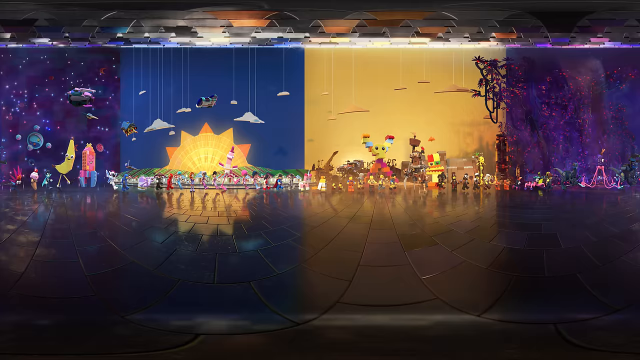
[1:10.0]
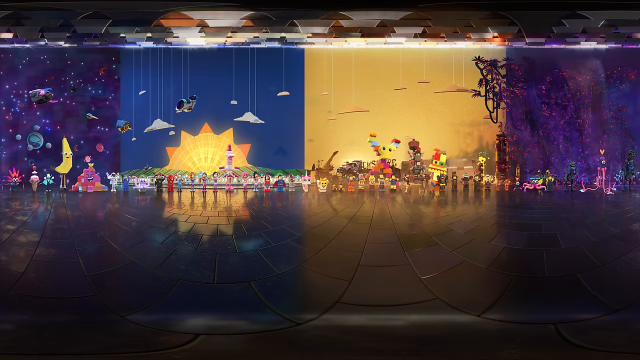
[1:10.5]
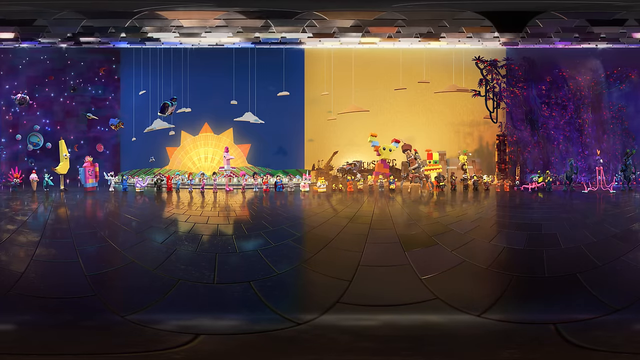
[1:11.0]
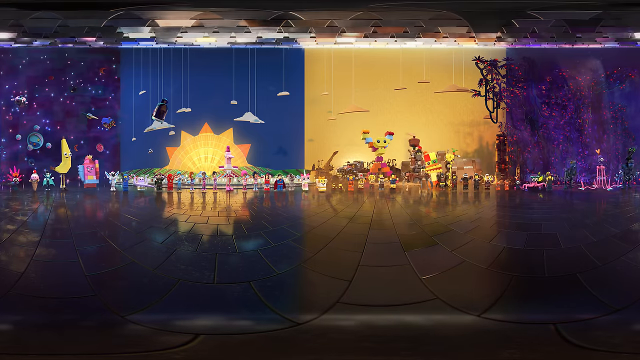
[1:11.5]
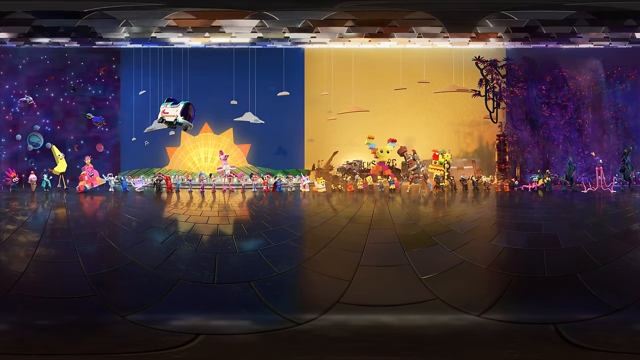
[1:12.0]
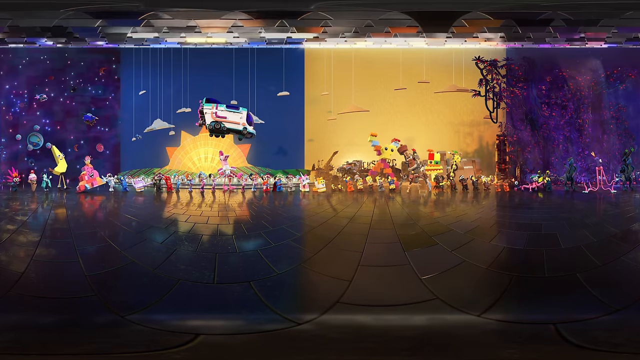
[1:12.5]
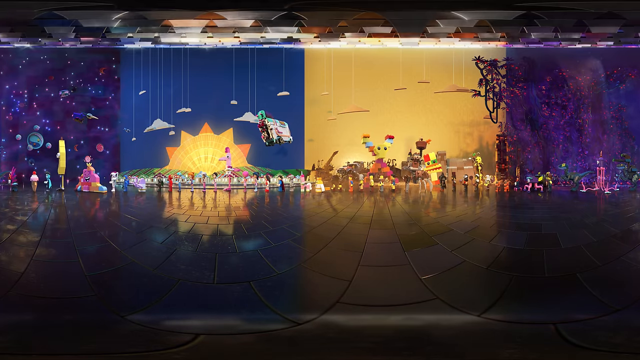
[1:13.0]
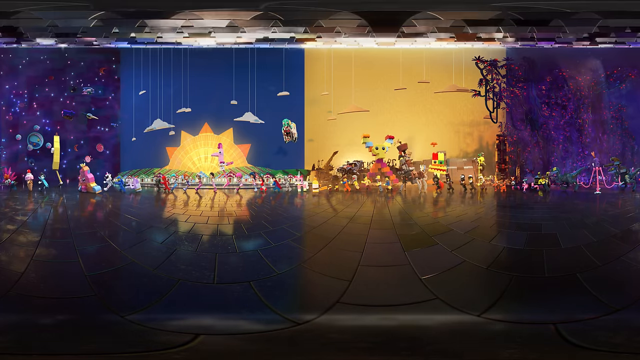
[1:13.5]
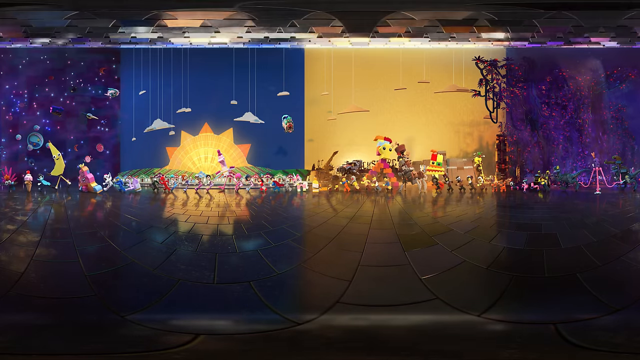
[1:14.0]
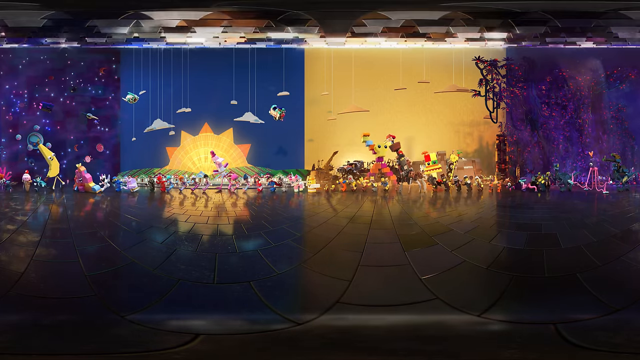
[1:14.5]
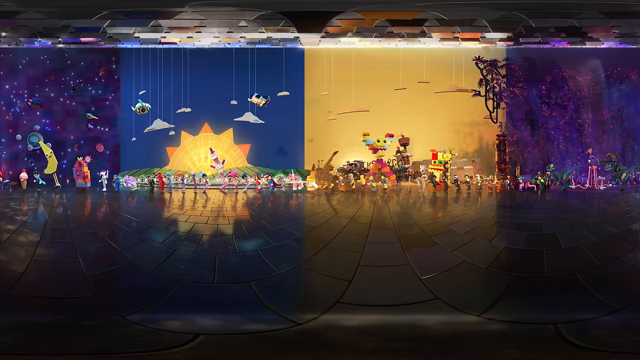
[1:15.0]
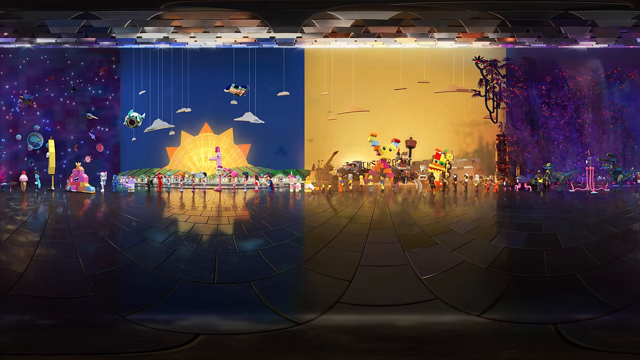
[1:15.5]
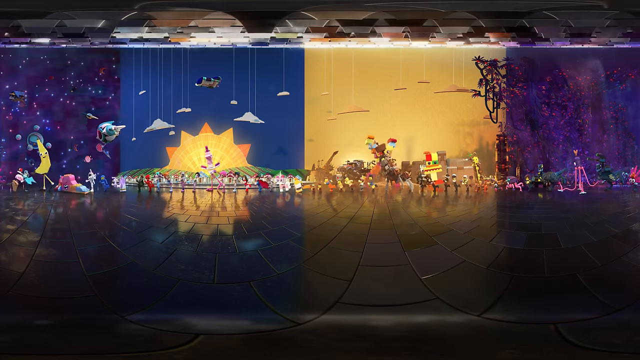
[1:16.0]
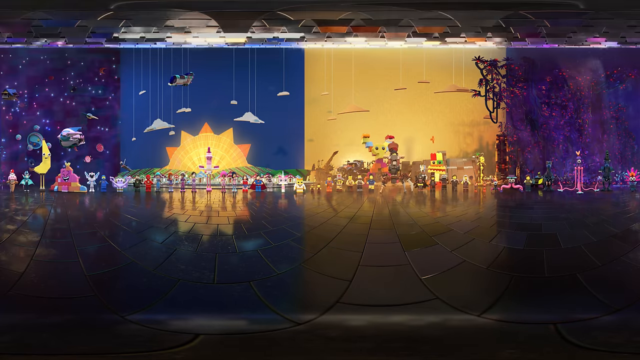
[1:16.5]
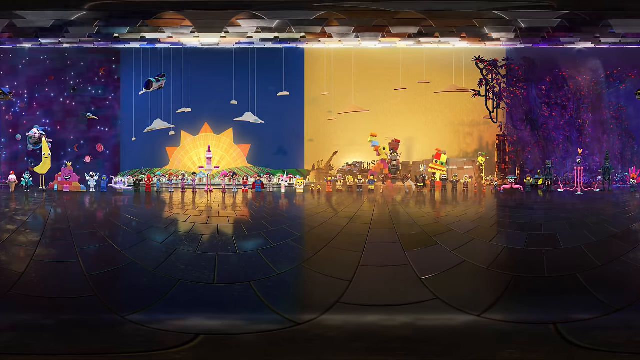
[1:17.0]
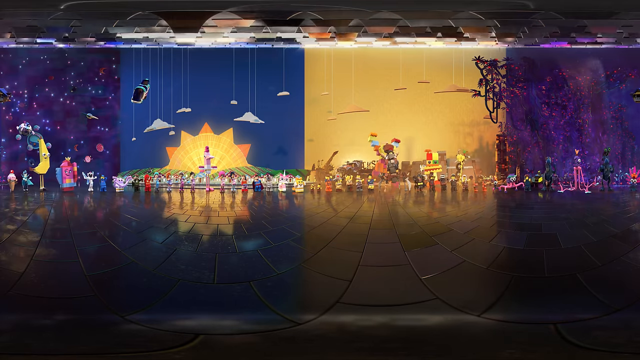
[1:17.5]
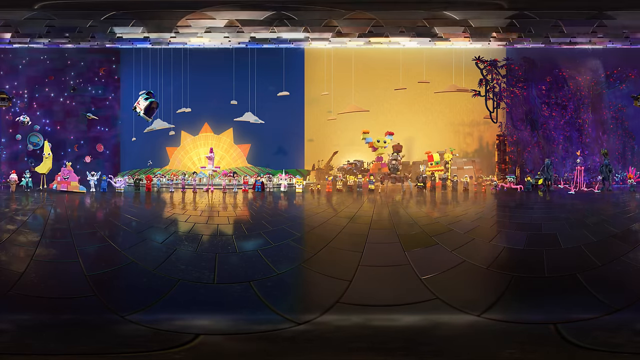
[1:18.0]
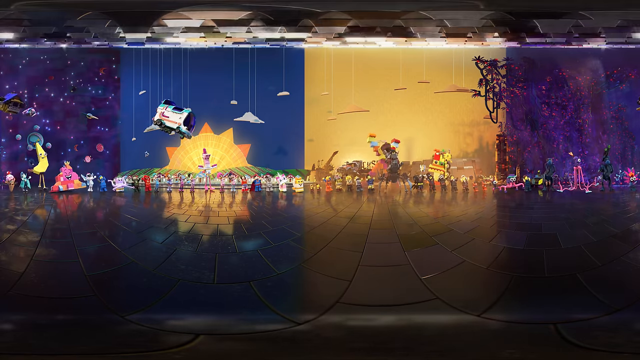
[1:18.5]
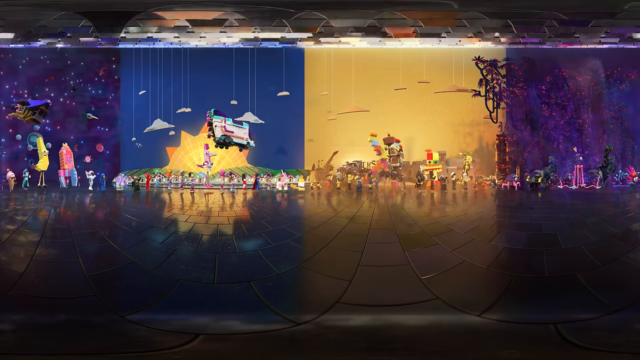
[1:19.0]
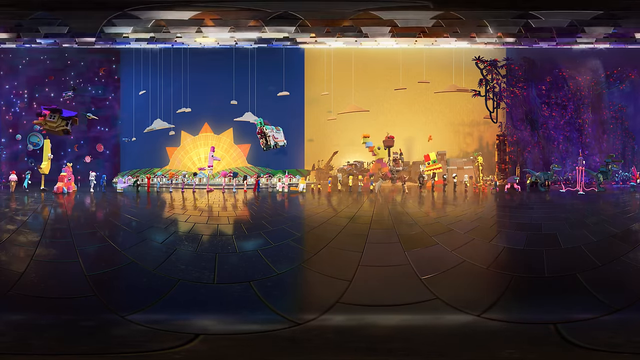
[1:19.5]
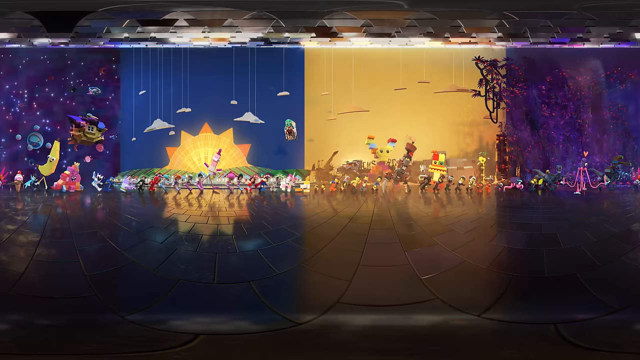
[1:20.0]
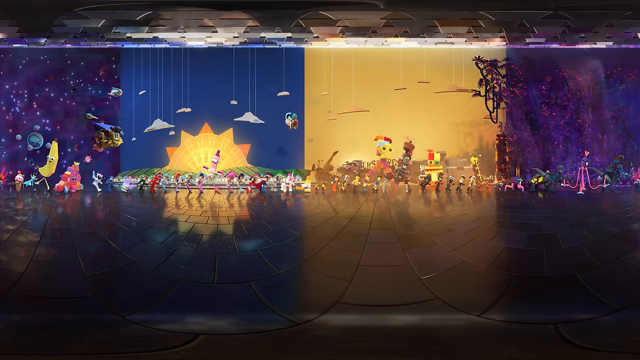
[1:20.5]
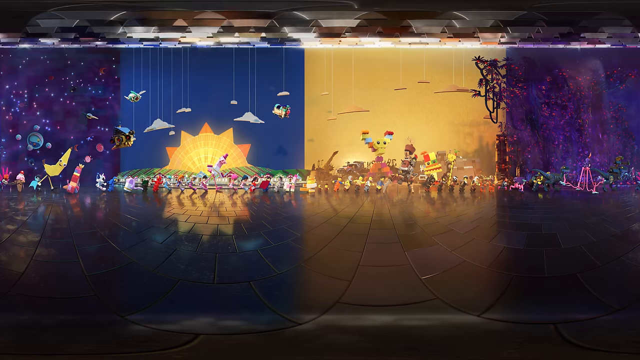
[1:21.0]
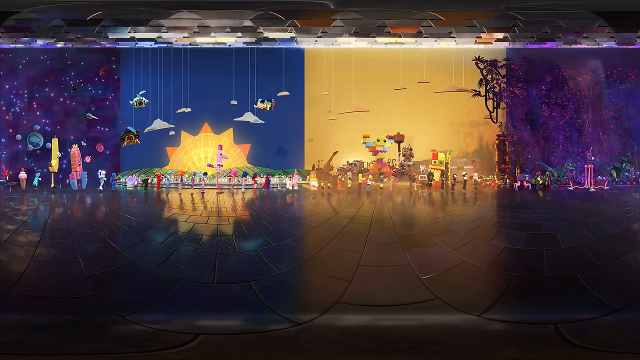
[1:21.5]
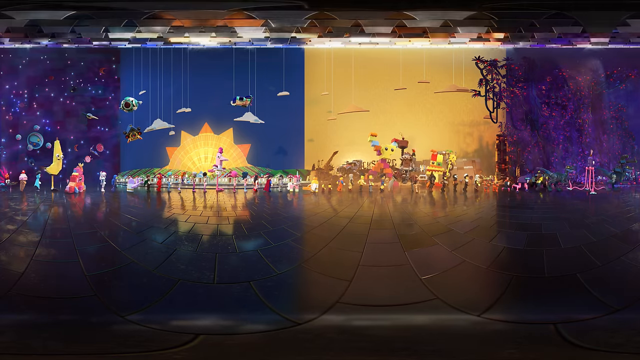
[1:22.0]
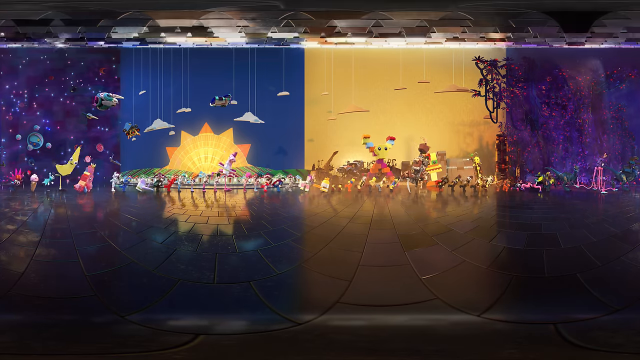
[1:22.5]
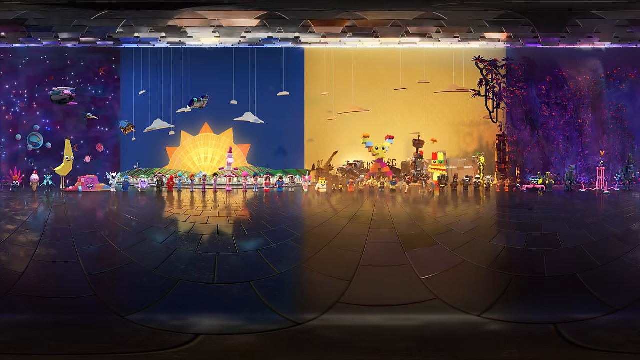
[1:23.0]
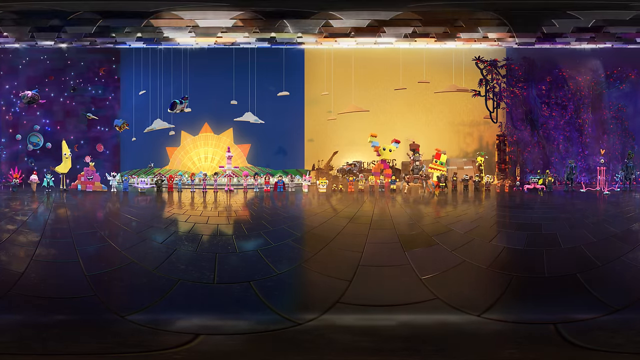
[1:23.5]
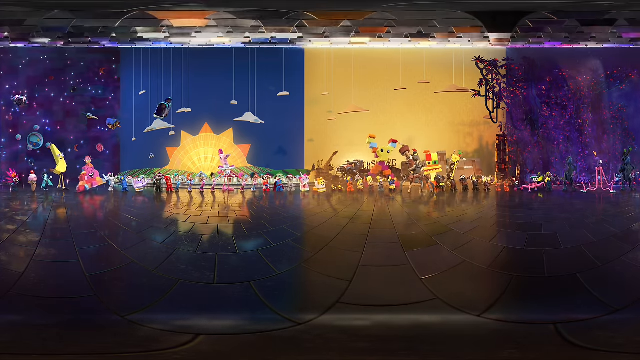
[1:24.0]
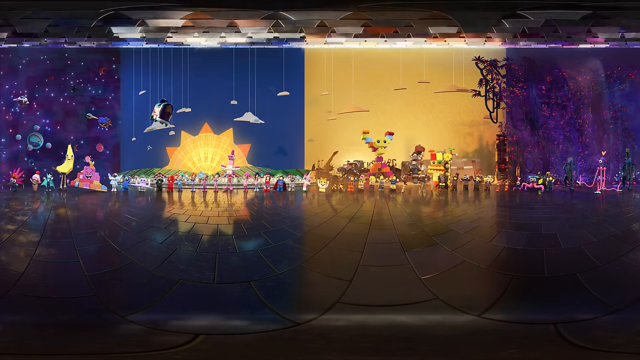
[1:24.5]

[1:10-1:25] All the figurines appear to continue the same line dance: they head to the right, hop and go to the center, then go to the left of the screen, hop and go to the center. A larger pink figurine is visible at the very left end of the line, and the overhead figurine continues to fly through. In the background on the left is a blue wall with some designs on it, which look like maybe part of a sun and some green, and on the right is a yellow wall.